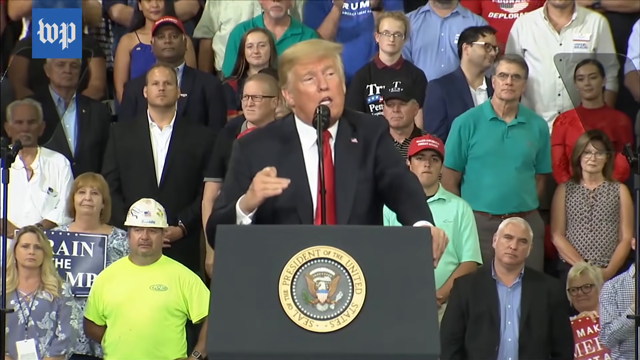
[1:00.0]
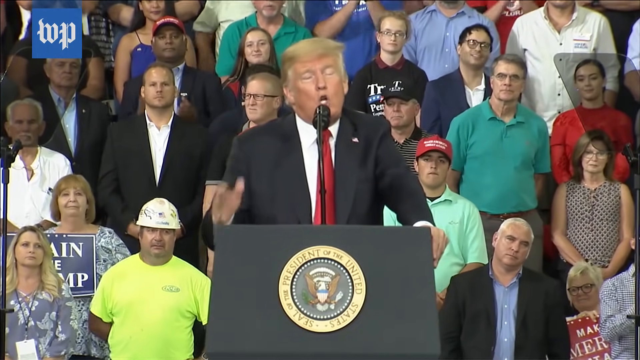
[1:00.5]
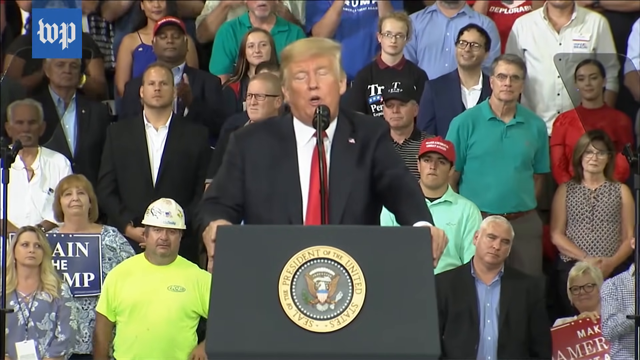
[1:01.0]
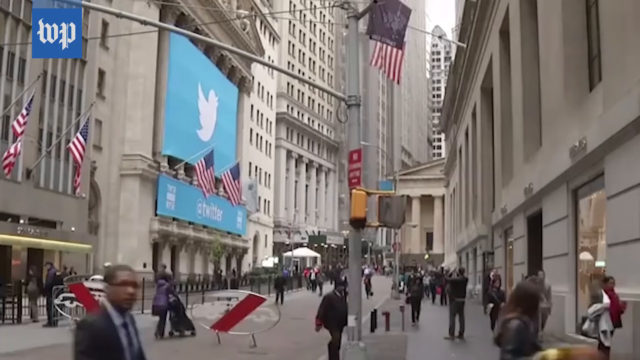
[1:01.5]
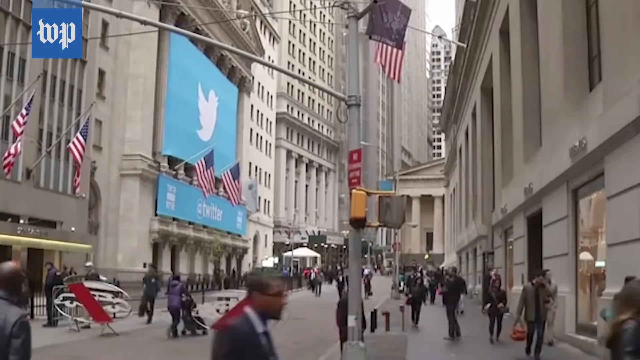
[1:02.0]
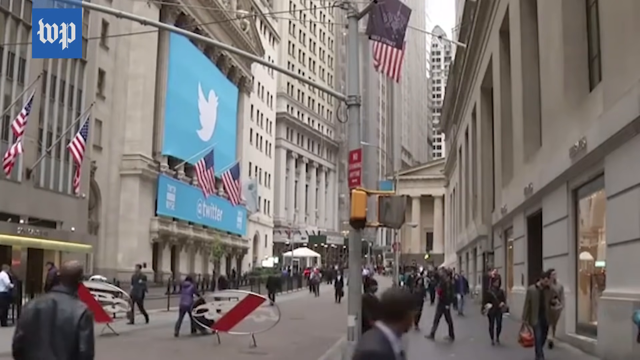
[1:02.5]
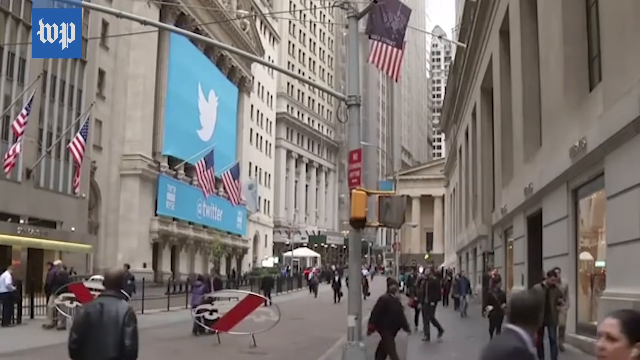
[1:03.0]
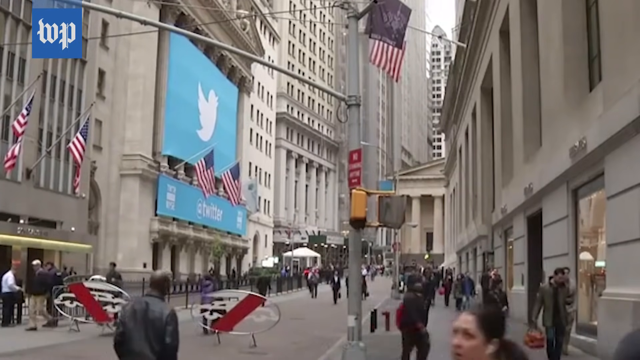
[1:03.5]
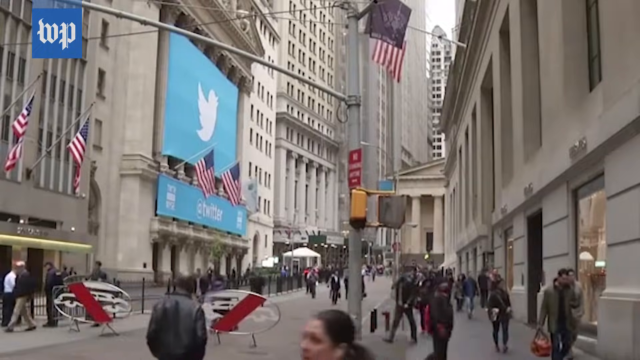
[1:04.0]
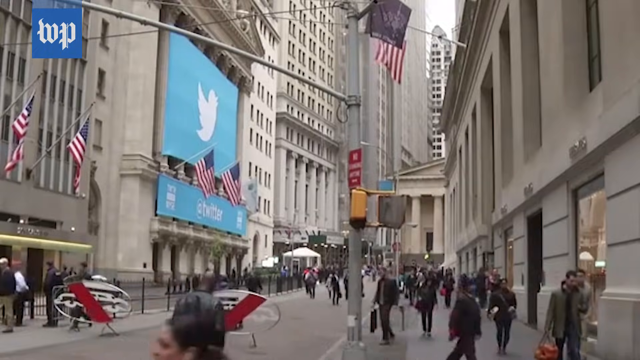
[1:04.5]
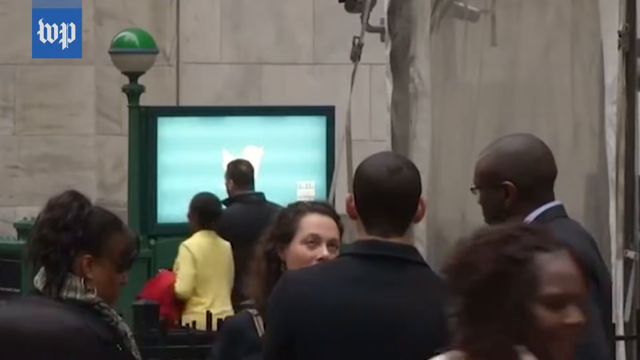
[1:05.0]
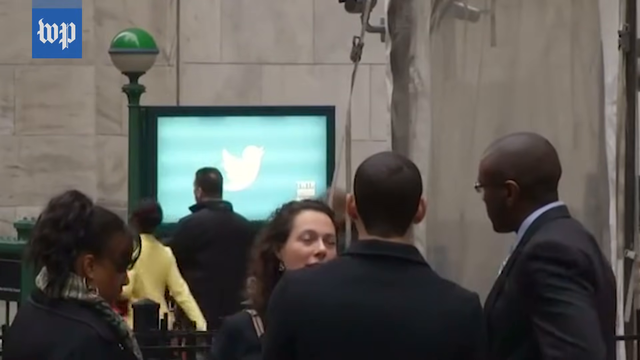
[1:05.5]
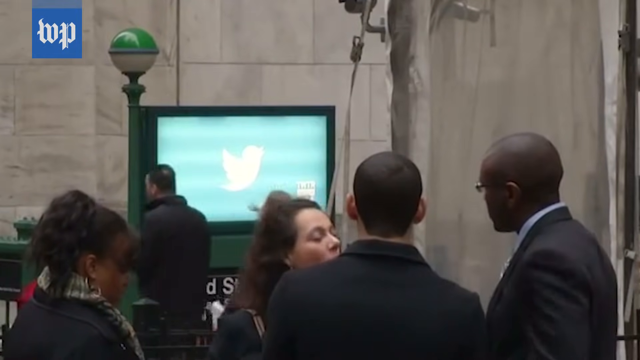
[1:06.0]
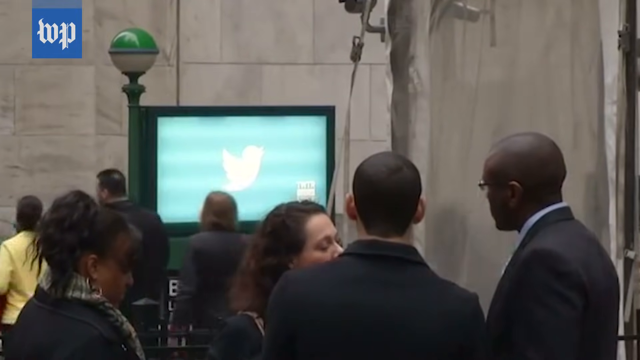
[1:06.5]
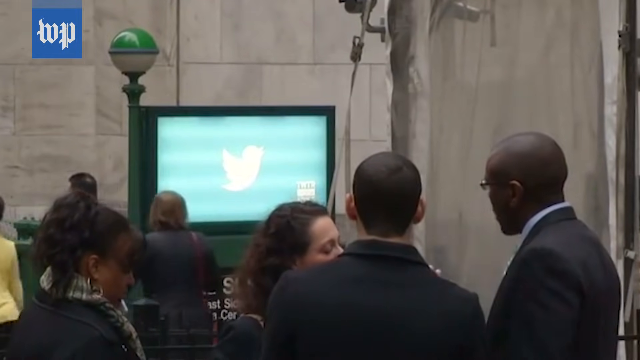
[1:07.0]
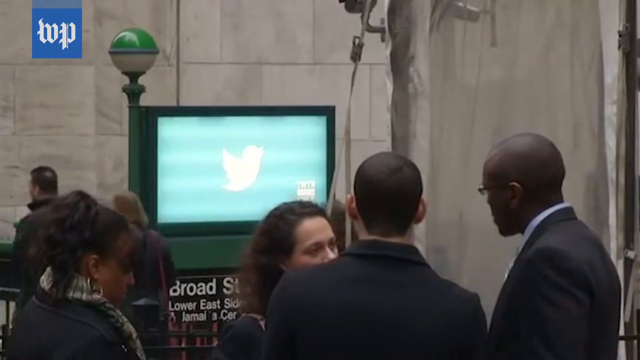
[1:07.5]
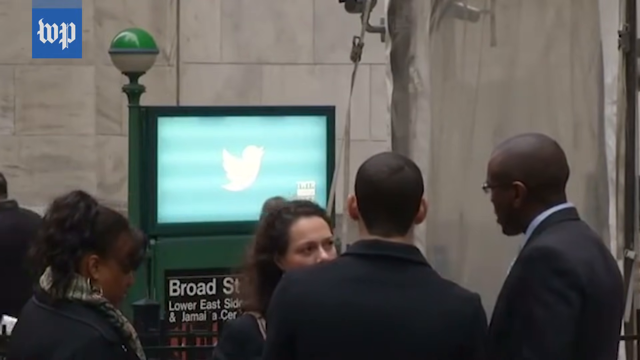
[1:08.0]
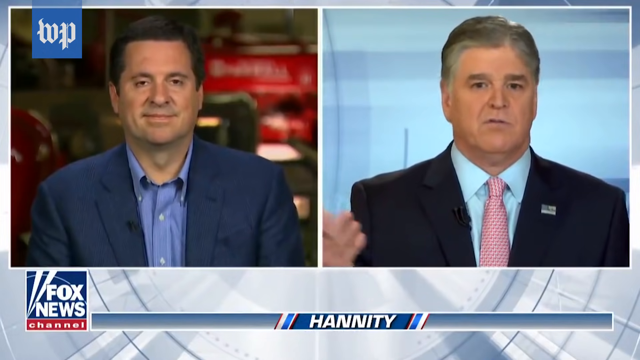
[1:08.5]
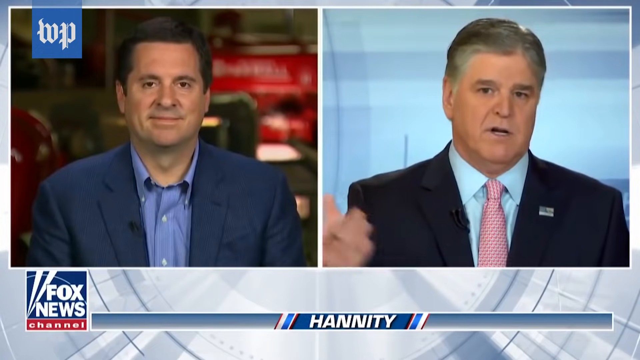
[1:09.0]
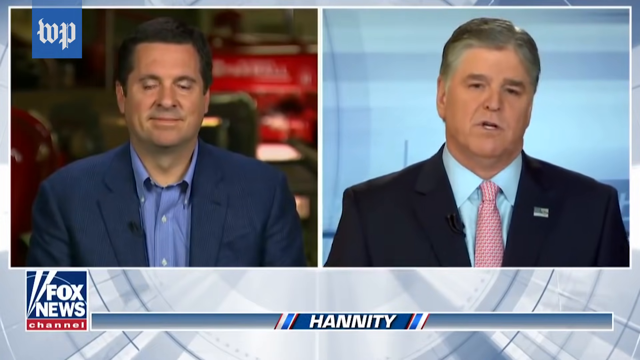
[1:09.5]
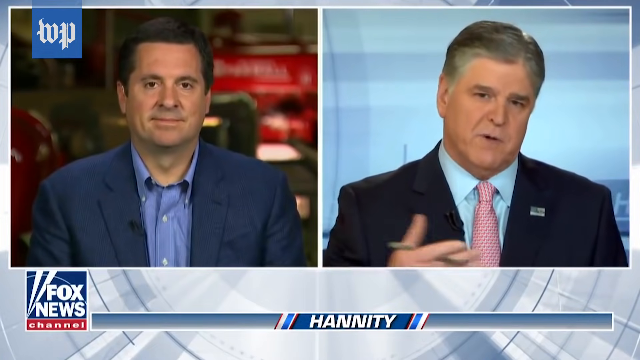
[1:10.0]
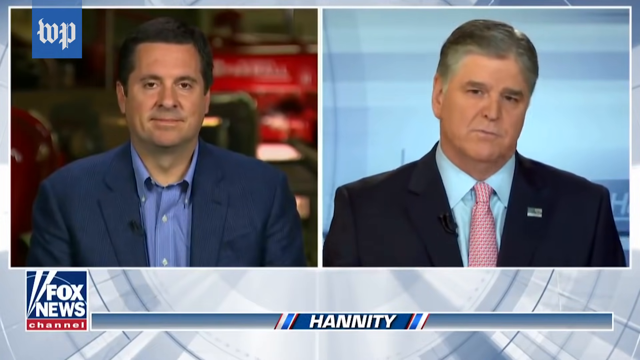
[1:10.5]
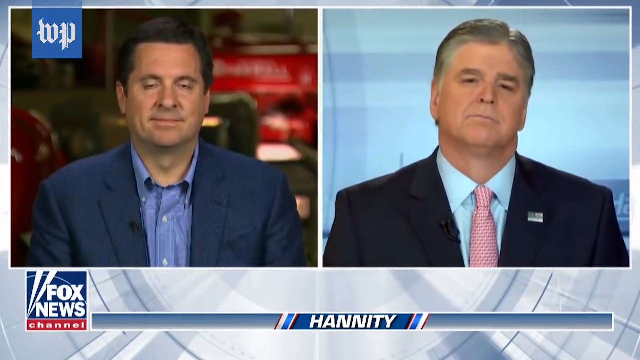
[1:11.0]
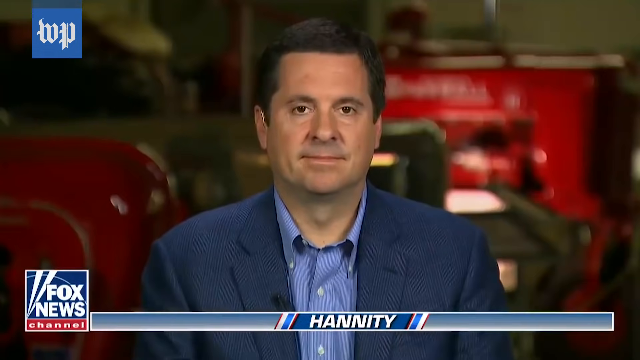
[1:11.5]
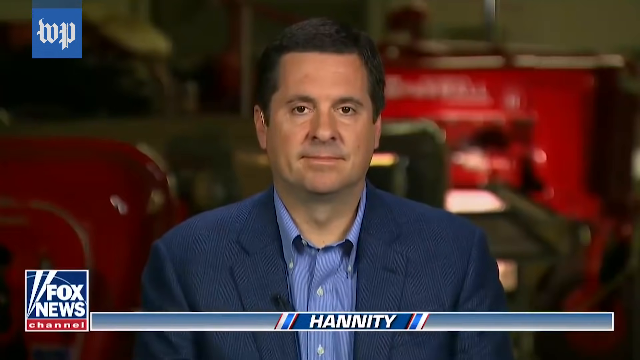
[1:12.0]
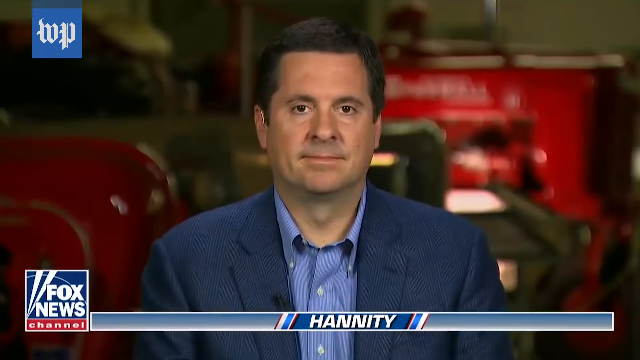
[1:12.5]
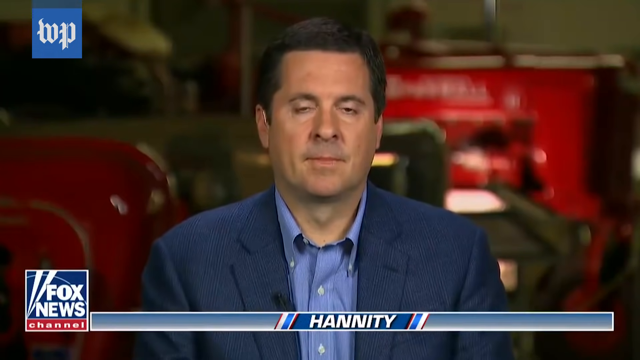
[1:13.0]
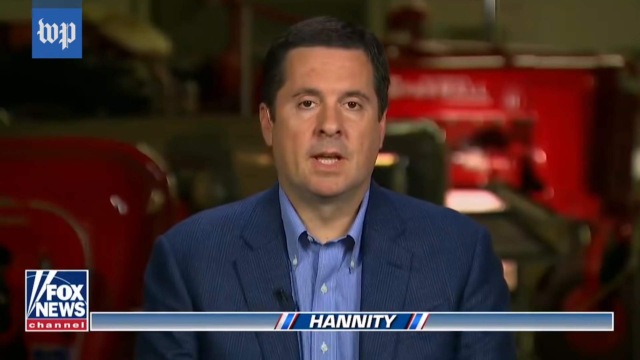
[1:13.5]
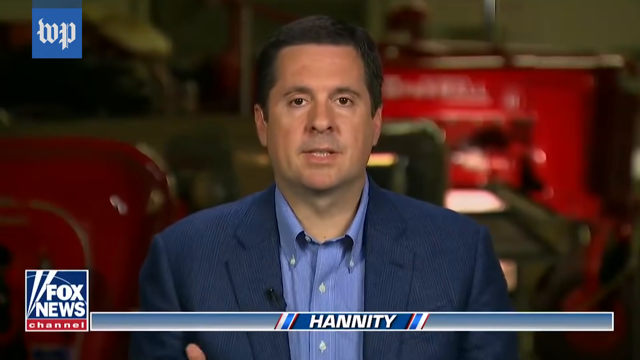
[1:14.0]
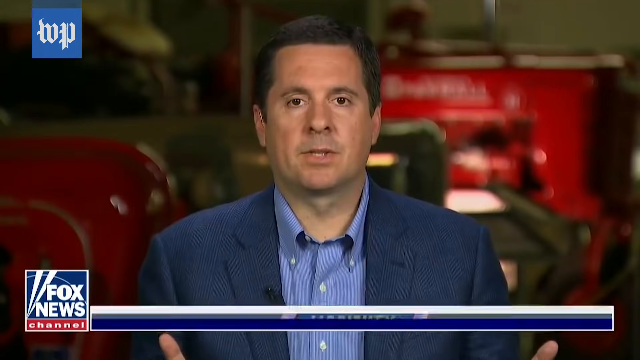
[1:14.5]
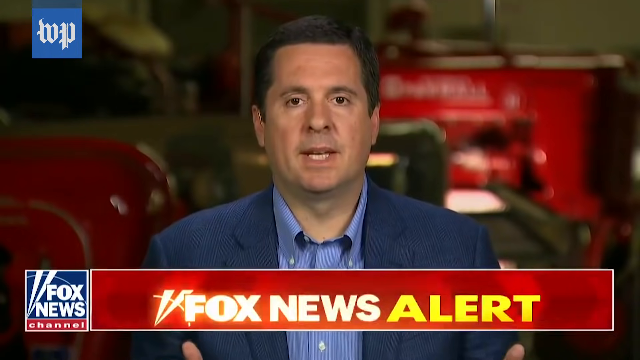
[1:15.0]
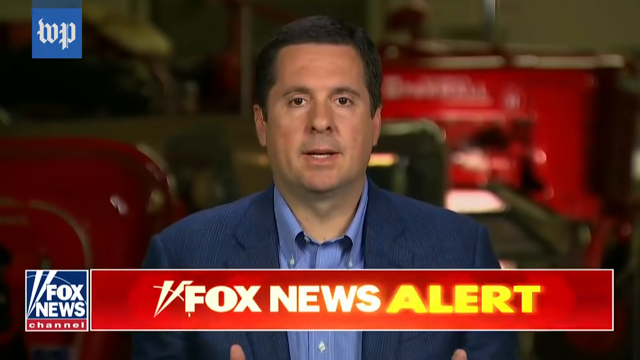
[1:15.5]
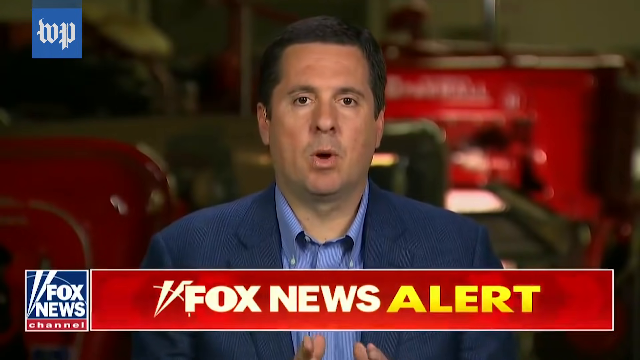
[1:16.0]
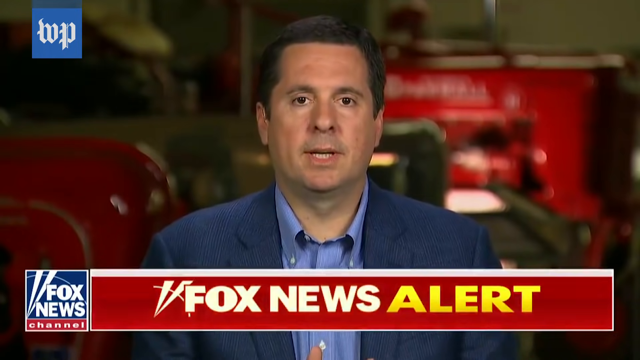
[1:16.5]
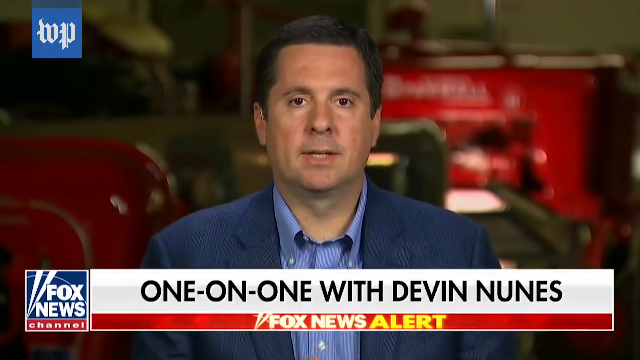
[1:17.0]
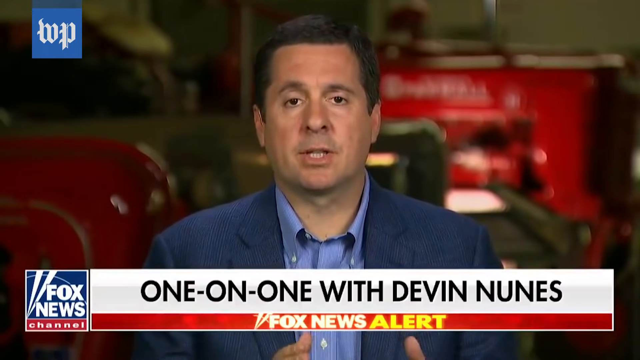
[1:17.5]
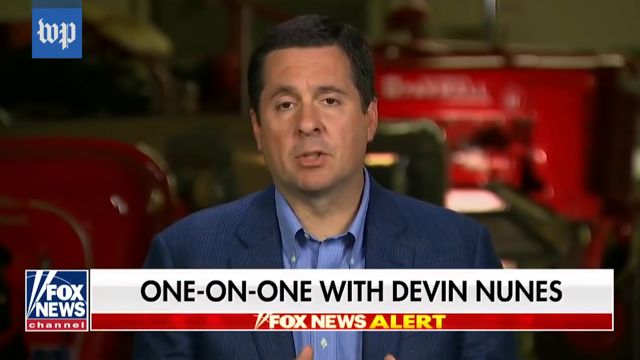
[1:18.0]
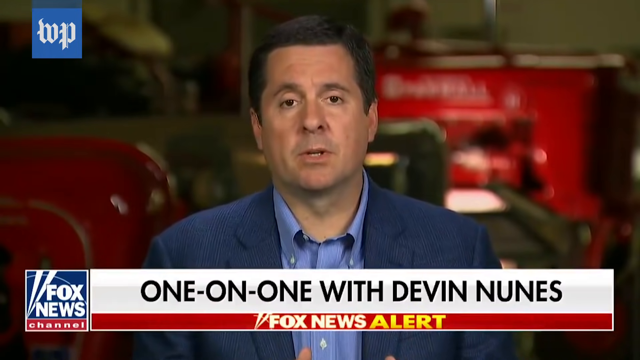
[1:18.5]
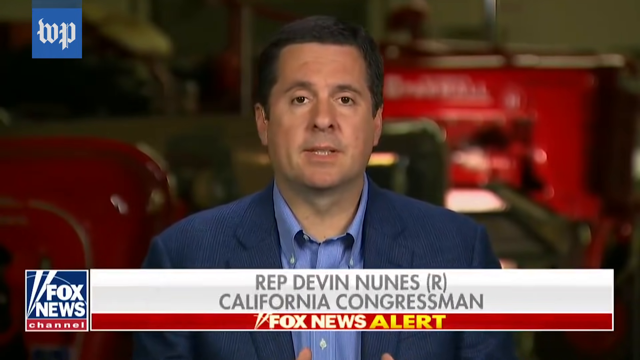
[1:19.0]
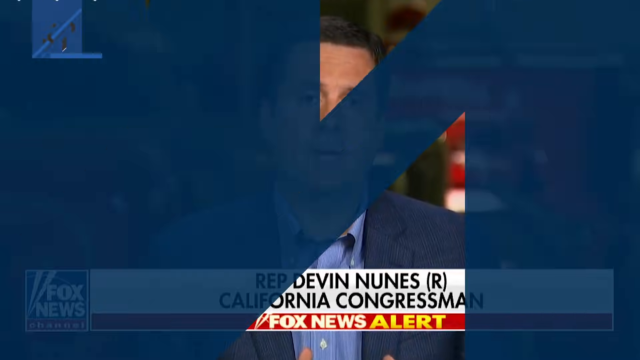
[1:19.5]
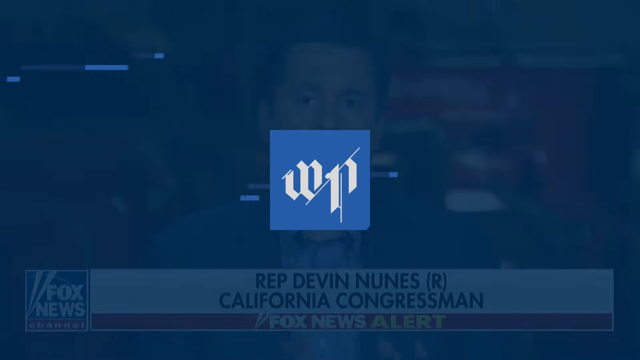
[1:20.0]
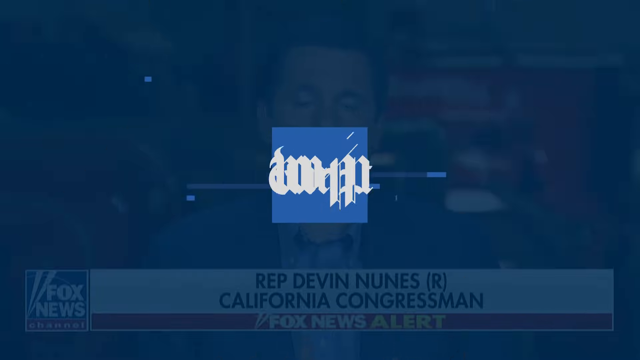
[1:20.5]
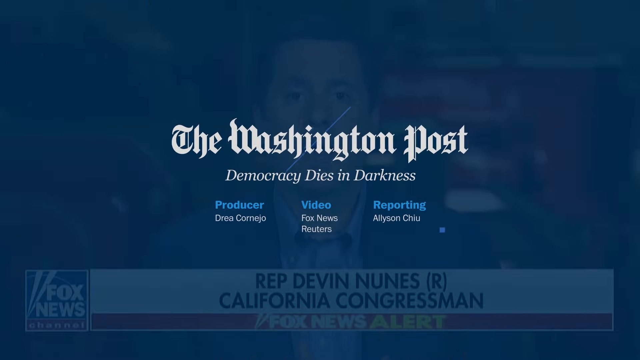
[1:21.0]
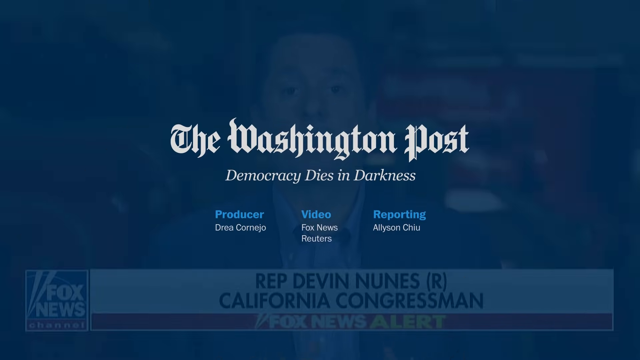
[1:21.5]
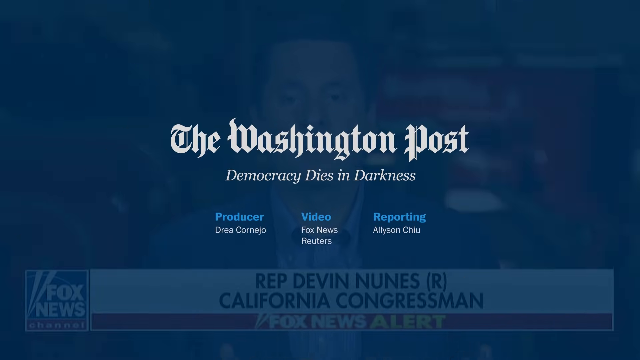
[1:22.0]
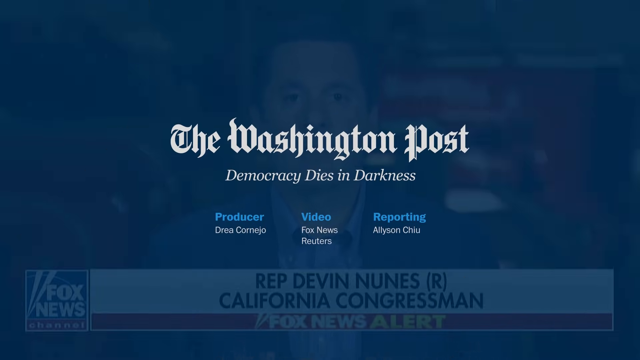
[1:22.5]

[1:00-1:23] Donald Trump stands before a crowd, wearing a black coat, red tie and white shirt, speaking into a microphone with his hands moving. Behind him many people wear clothes of different colours, including blue, red, black and white, with one in a blue coat; others wear hats or T-shirts printed with Trump. Most are men and few are women. The crowd starts clapping. Next is a photo of New York City with several American flags, many people walking on the street, and very tall buildings. The scene then moves to a boardroom where people in black suits are conversing, with an image of Twitter in the background. Back in the studio, the Fox News reporter appears in a blue coat and blue shirt, with an interviewee in a black suit and blue shirt on the right.